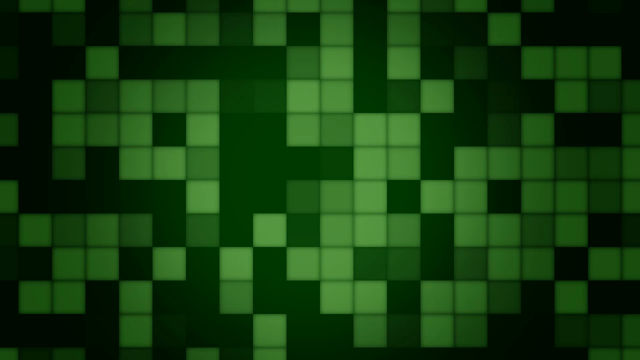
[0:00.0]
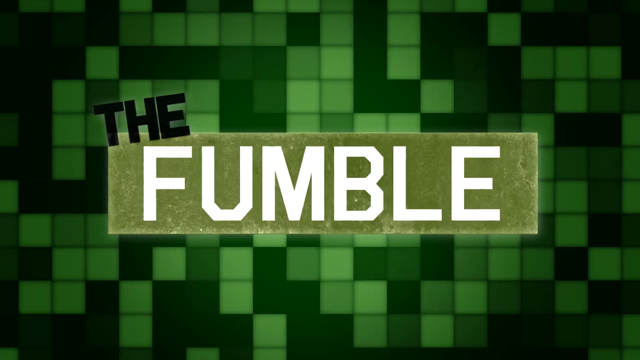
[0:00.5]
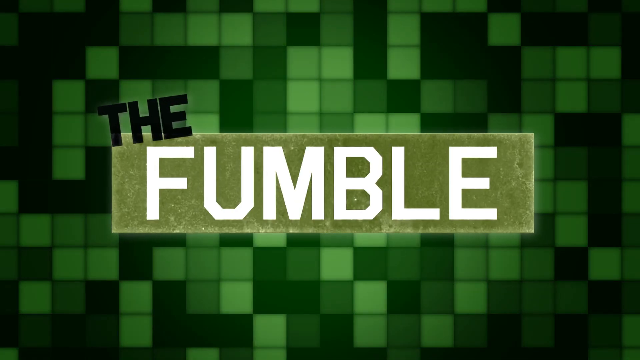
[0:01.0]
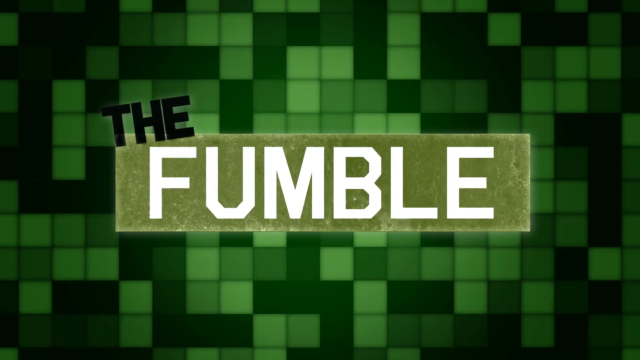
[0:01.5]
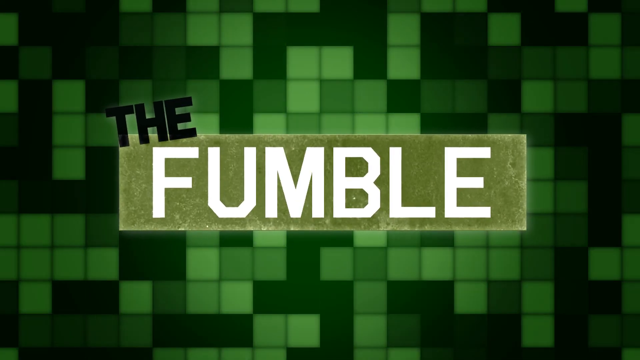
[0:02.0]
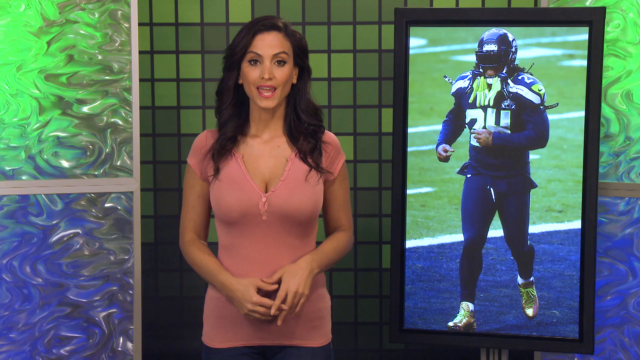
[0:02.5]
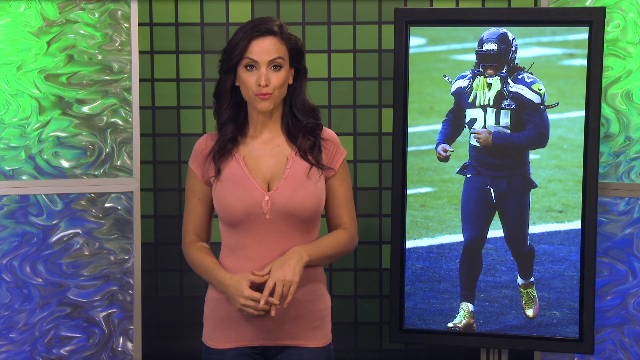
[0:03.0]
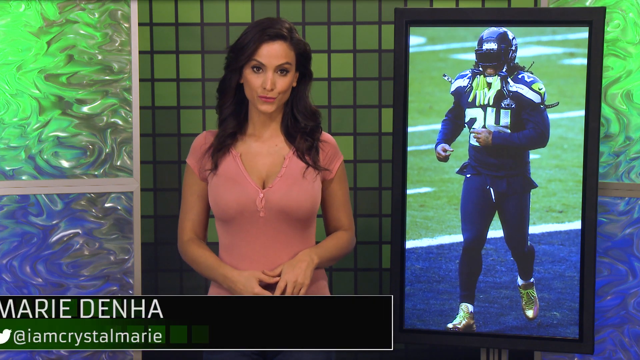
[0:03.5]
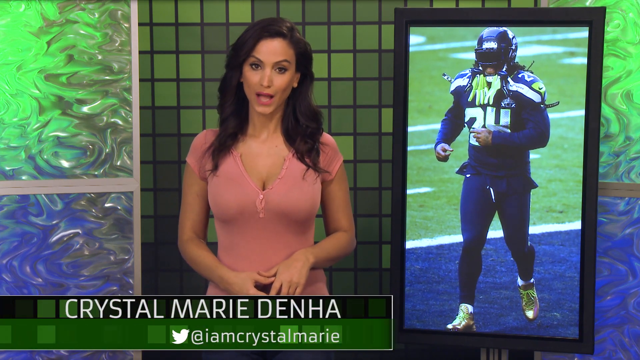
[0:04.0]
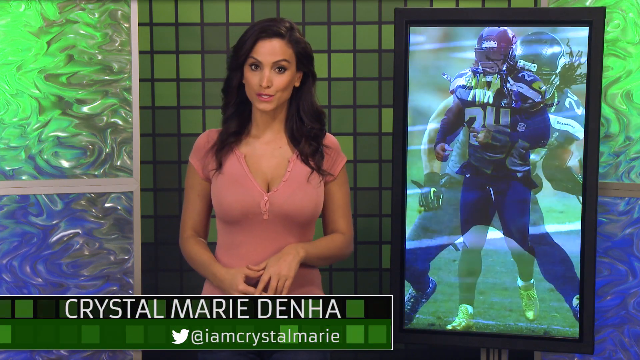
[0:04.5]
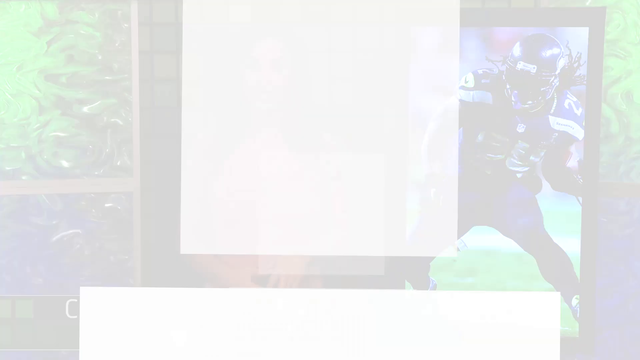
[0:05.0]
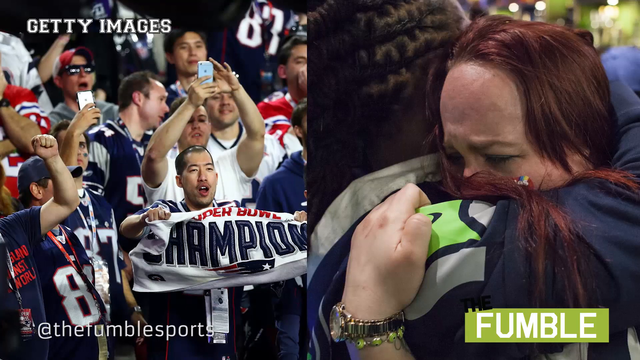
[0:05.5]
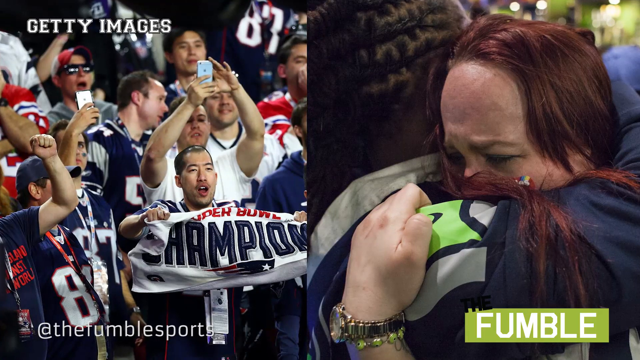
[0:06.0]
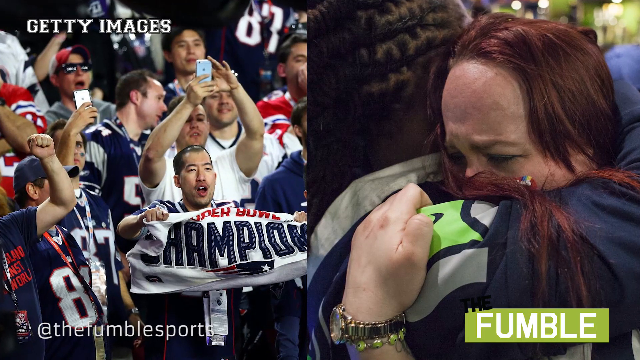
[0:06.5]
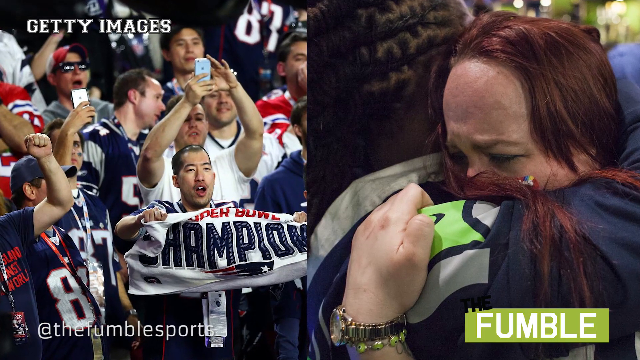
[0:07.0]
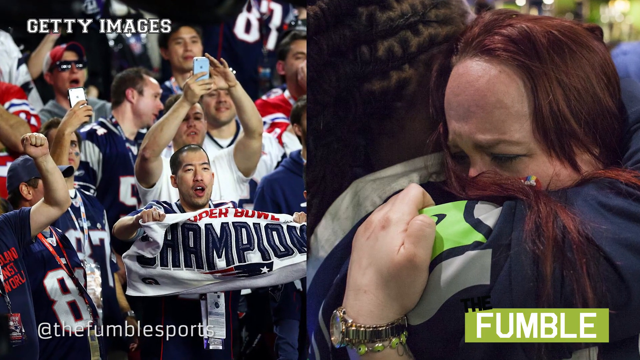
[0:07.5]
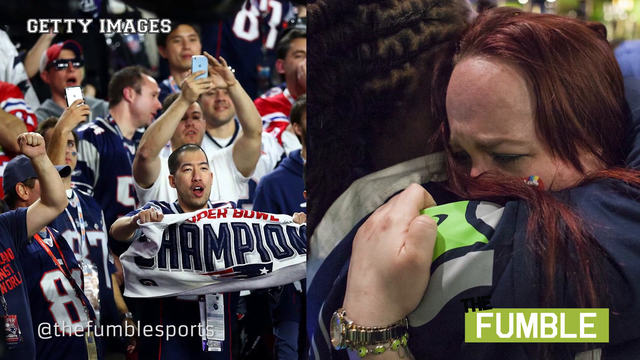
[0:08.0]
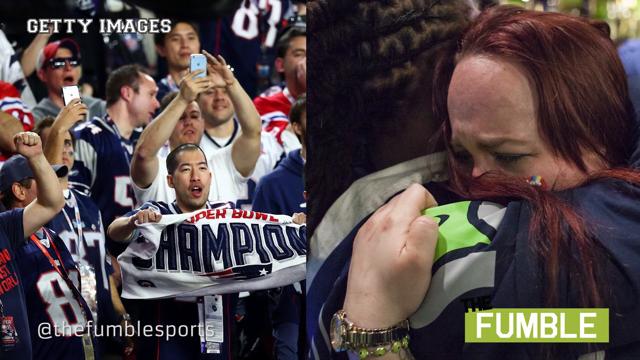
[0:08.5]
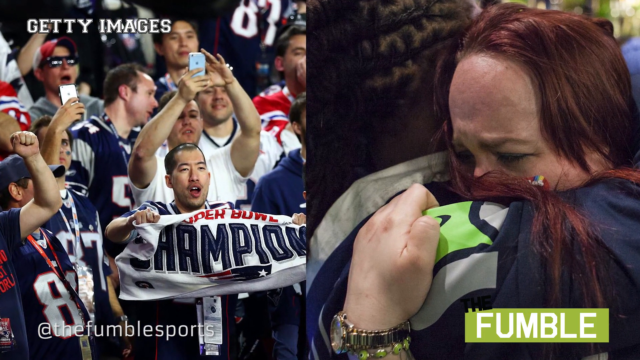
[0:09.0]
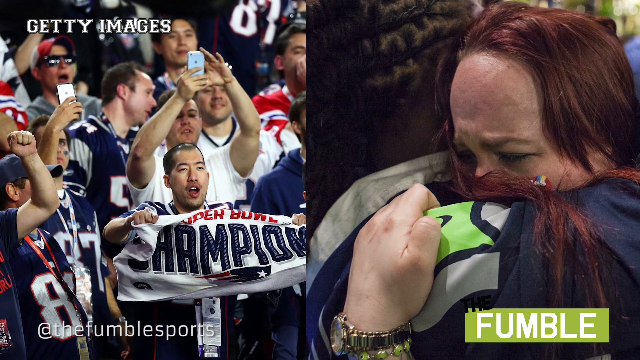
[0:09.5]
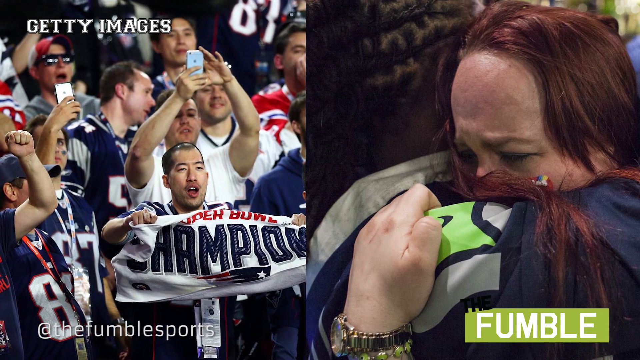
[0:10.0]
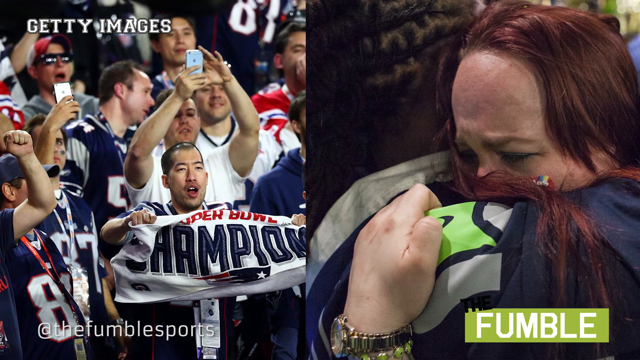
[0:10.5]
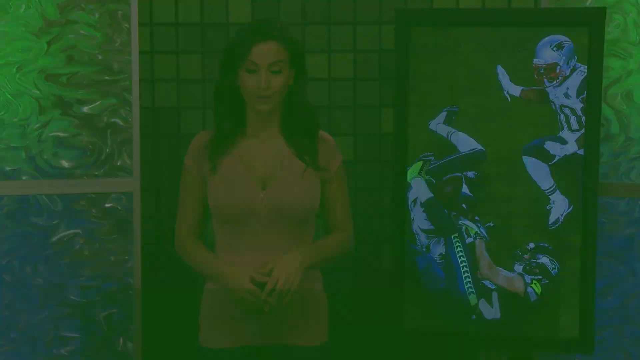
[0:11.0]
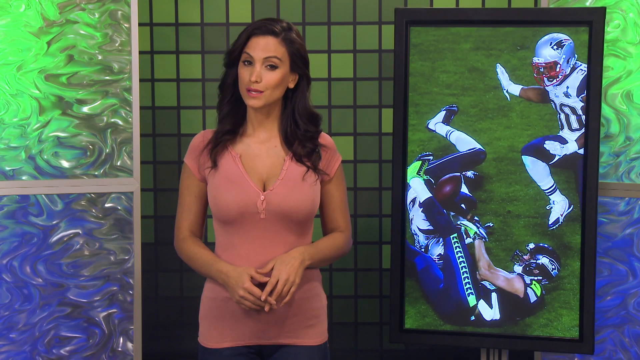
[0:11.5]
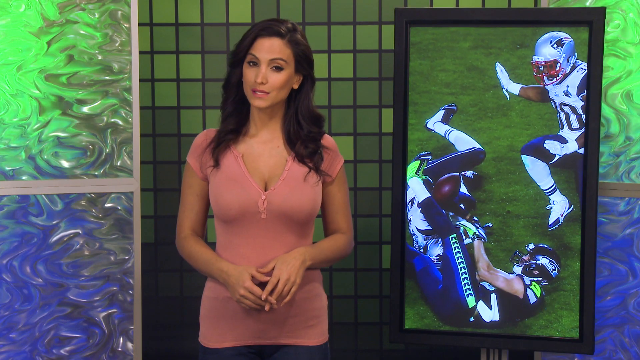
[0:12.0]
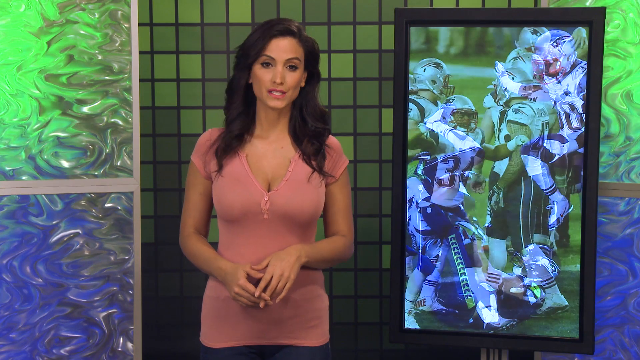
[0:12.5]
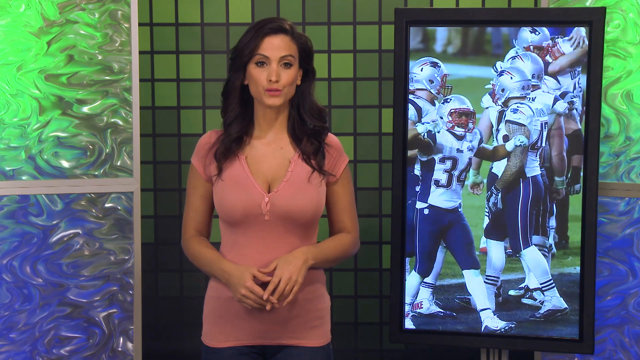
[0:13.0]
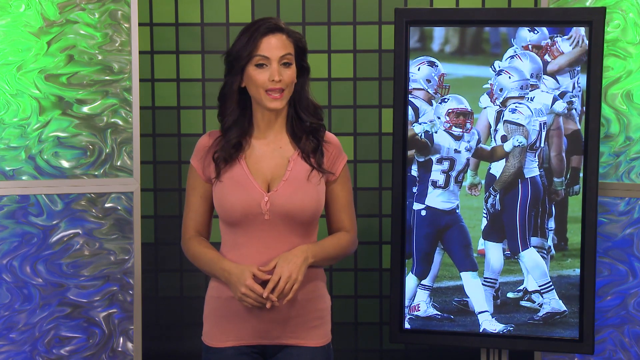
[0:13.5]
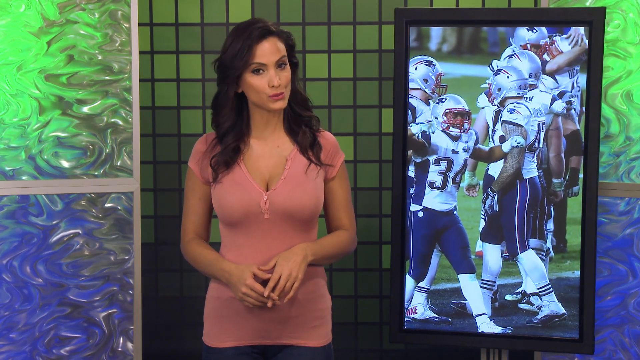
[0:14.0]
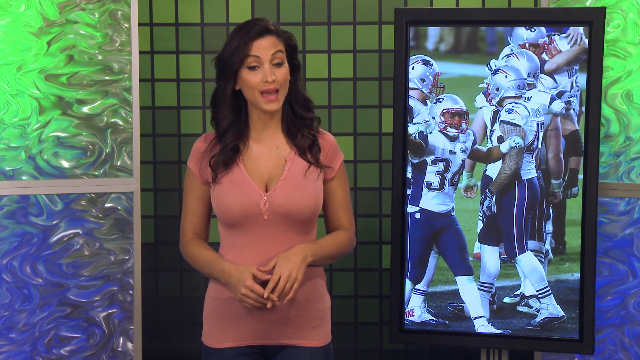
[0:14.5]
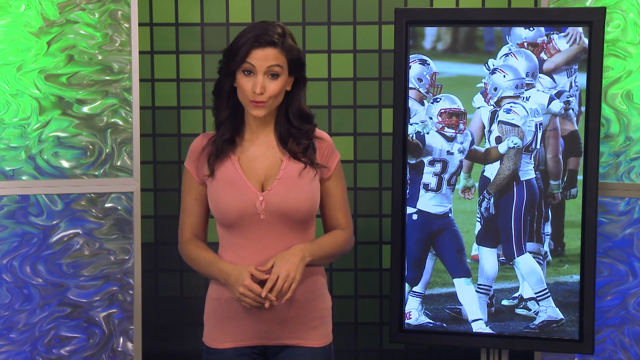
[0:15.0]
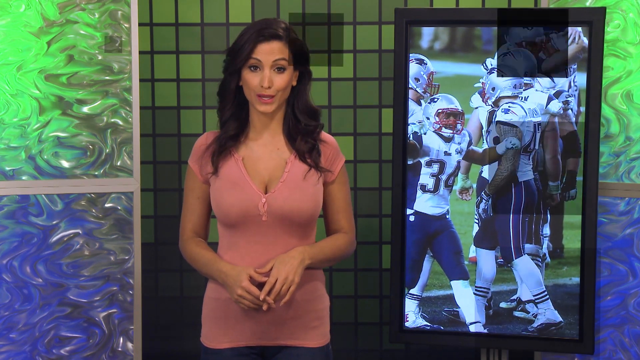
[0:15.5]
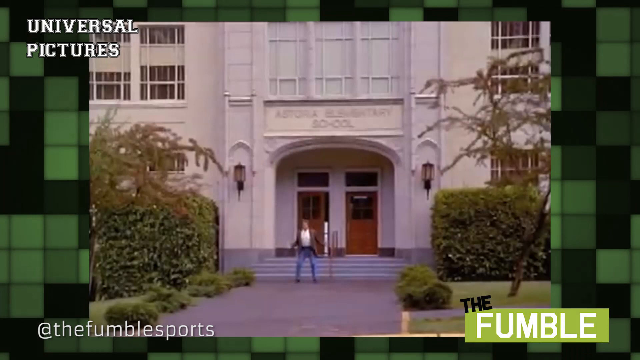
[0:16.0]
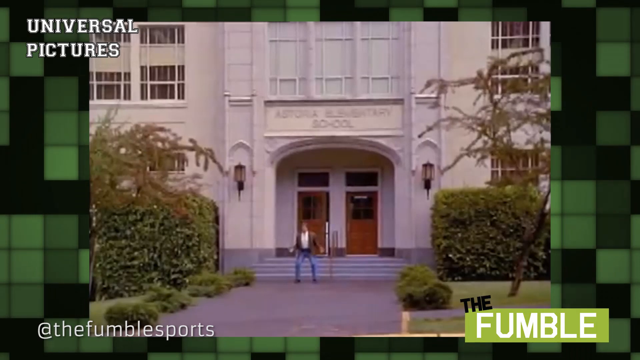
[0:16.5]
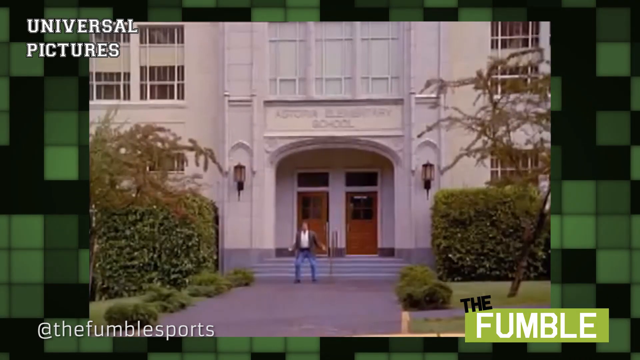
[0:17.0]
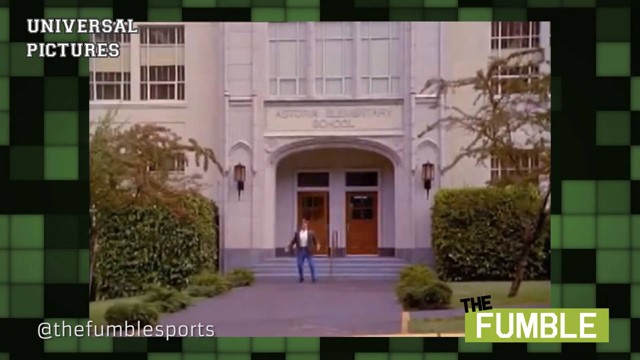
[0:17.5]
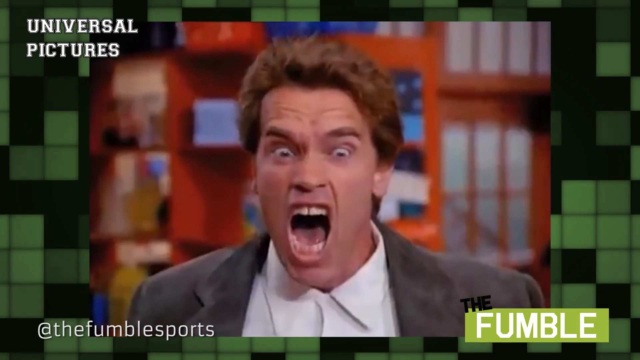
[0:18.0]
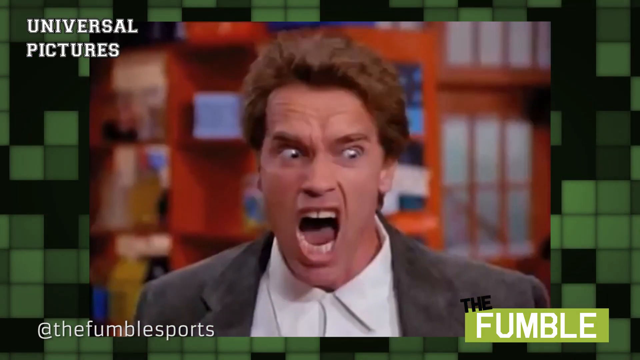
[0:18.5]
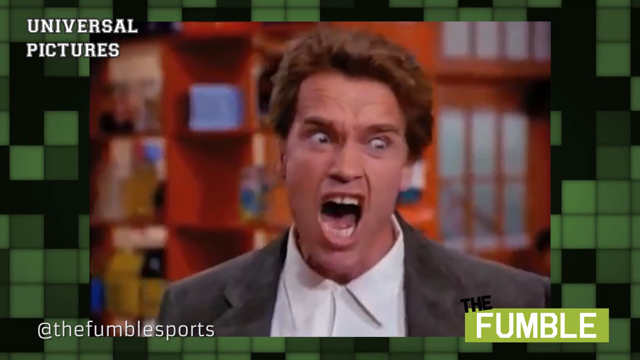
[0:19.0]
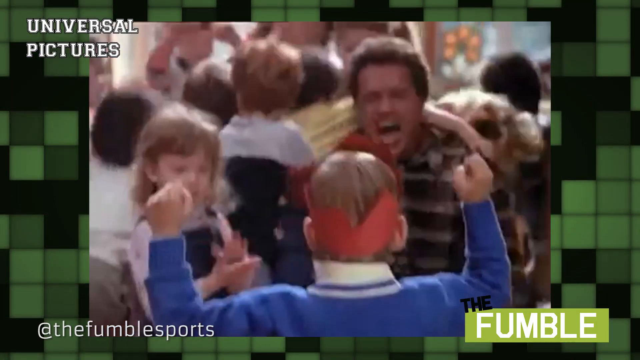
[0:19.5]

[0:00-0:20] The video opens on a design screen of small, connected squares in different shades of green that make up the whole background, some lighter than others, with "The Fumble" in the center. It then switches to footage of a female reporter named Crystal in the center, wearing a pink dress. She is standing, seen from the front, has longer black hair, and holds her hands by her waist area. On the right-hand side is an image of a Seahawks player, an NFL player. The view changes to a dual screen: the left side shows the New England Patriots celebrating, with the text "Super Bowl champions" and "Getty images" at the top left, while the right side appears to show two people hugging who look sad. The video cuts back to the reporter standing in the middle, and the image on the right changes to a group of Patriots players standing around a football field. It then changes to a meme of somebody yelling.